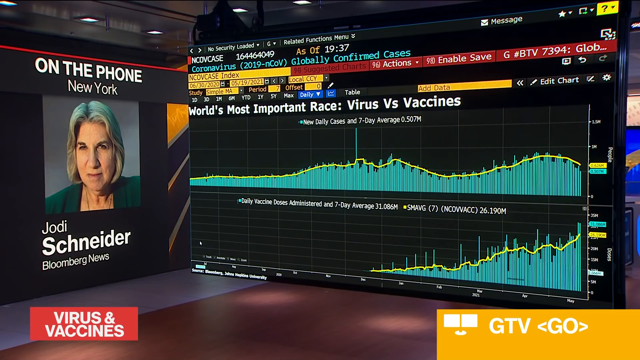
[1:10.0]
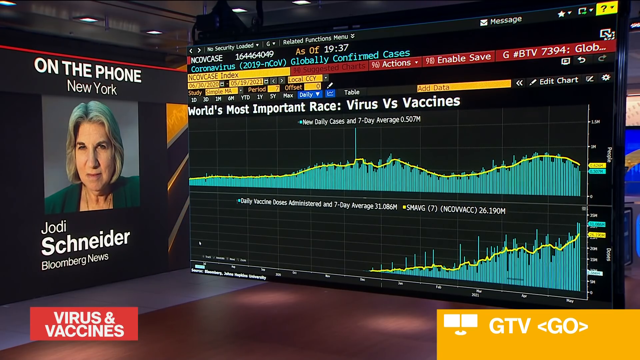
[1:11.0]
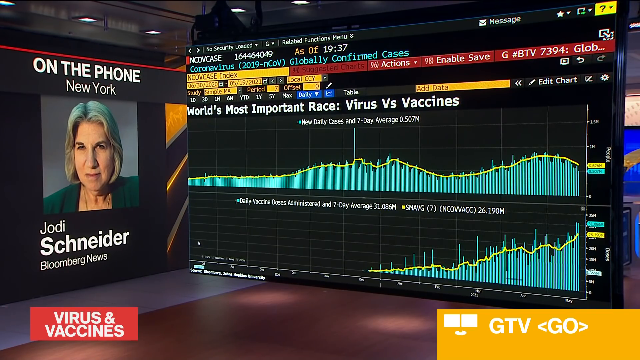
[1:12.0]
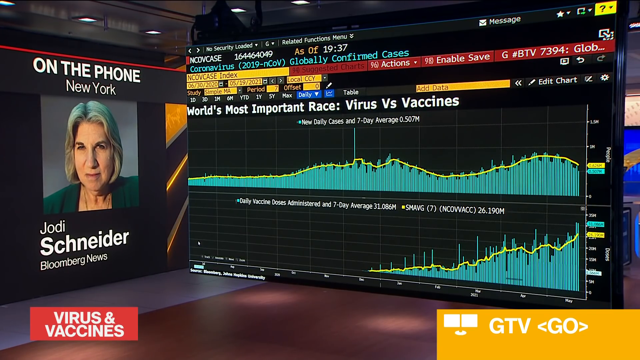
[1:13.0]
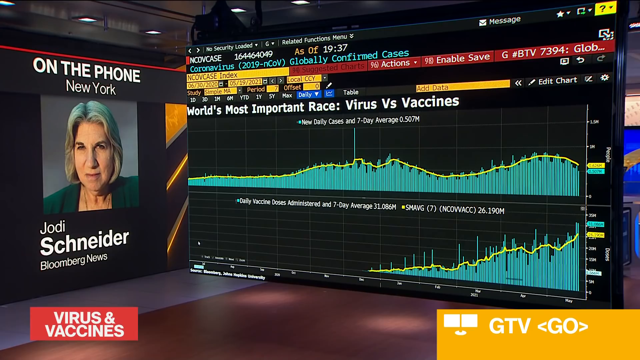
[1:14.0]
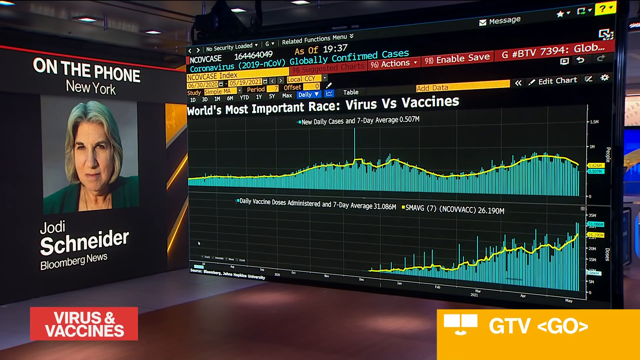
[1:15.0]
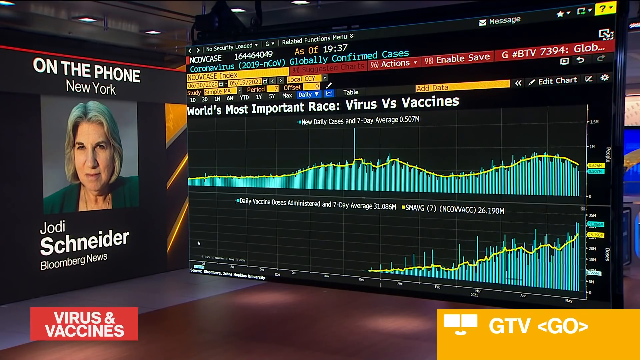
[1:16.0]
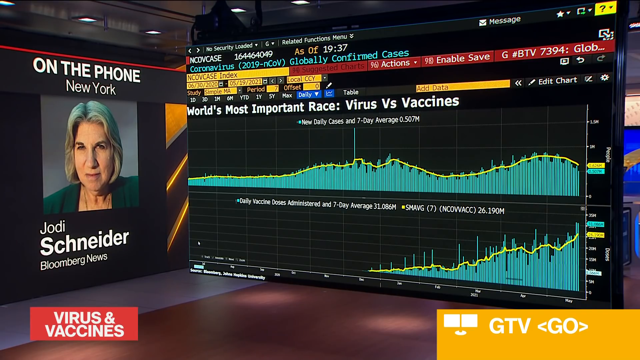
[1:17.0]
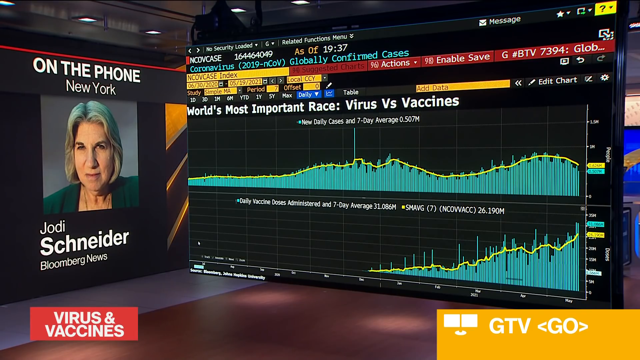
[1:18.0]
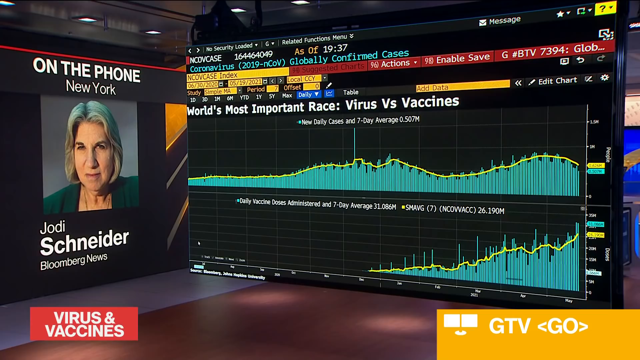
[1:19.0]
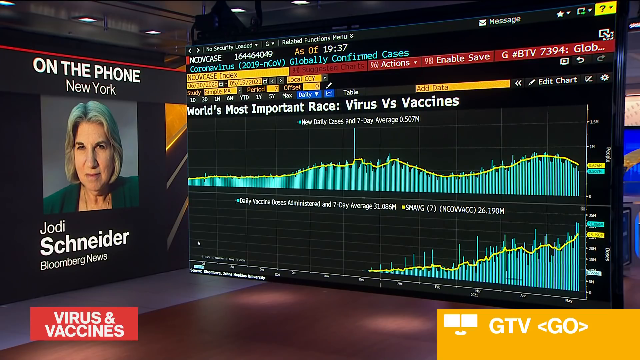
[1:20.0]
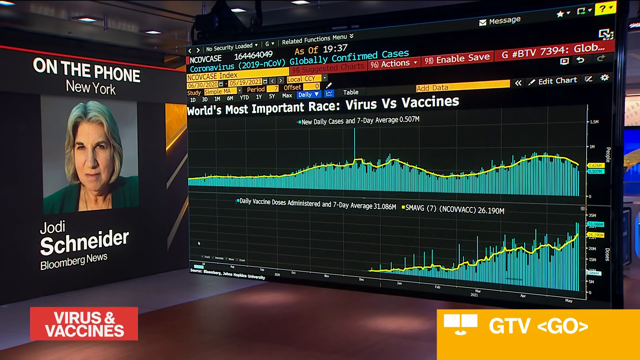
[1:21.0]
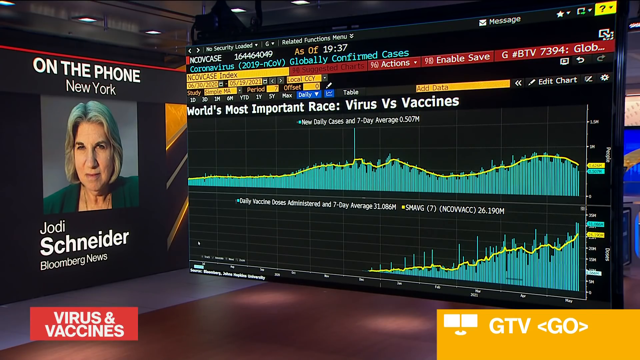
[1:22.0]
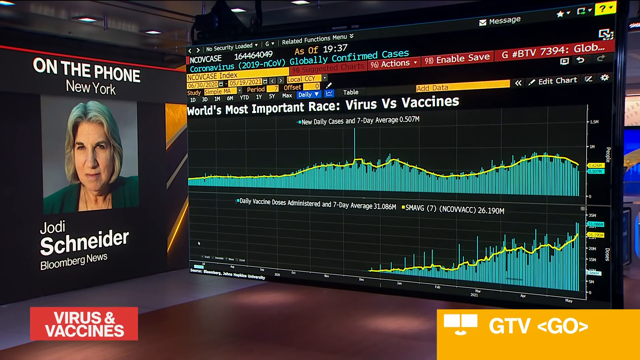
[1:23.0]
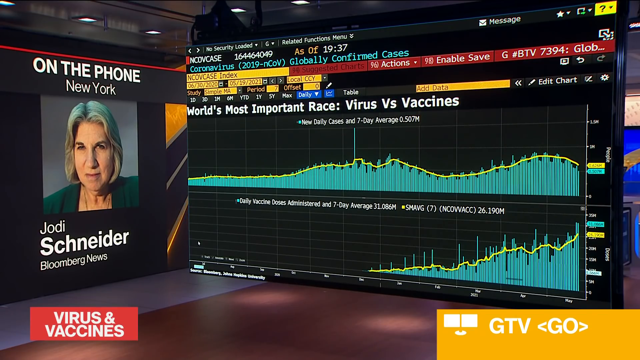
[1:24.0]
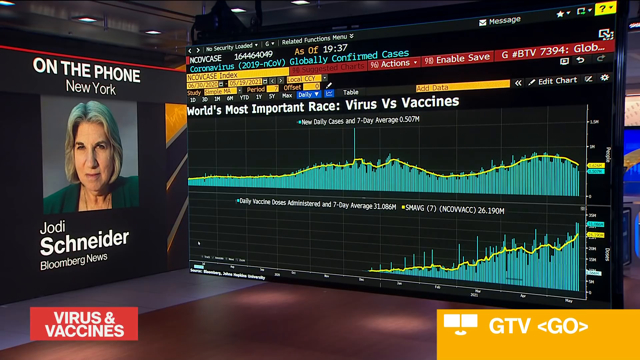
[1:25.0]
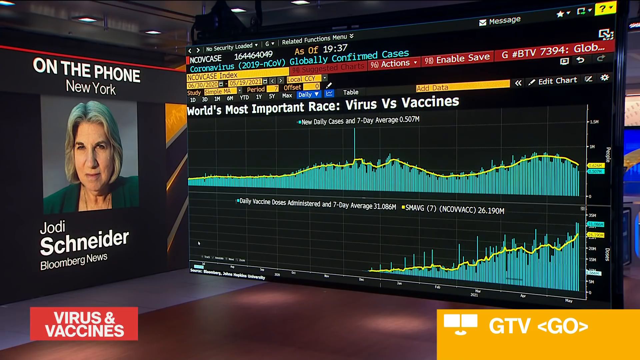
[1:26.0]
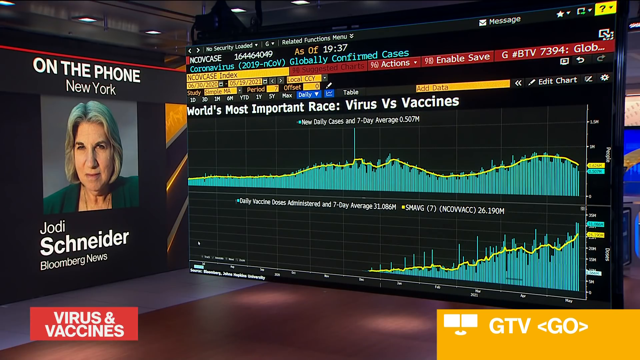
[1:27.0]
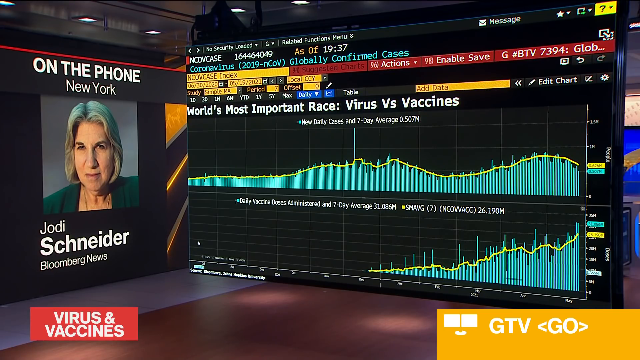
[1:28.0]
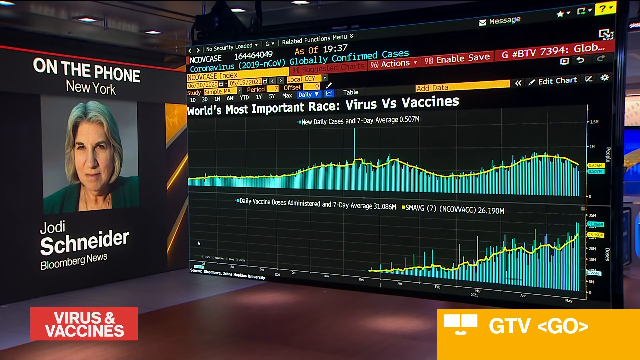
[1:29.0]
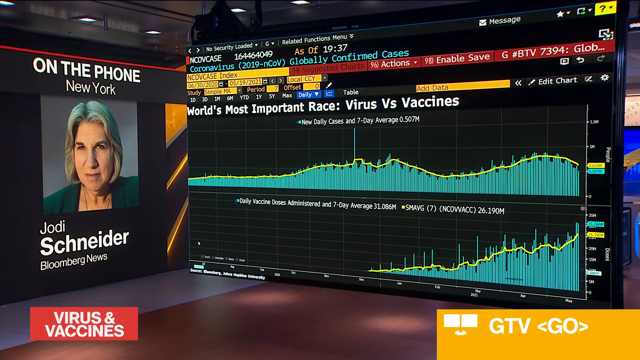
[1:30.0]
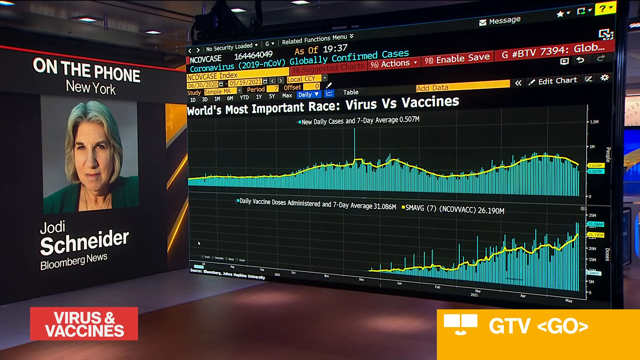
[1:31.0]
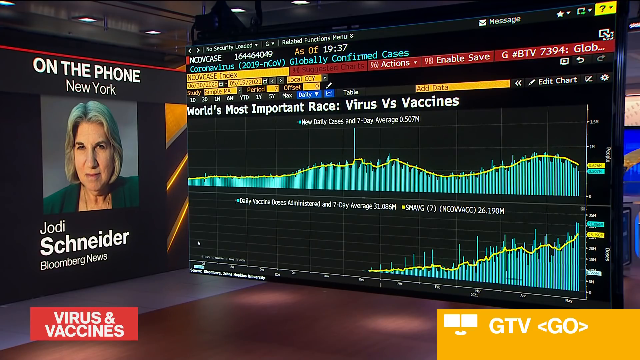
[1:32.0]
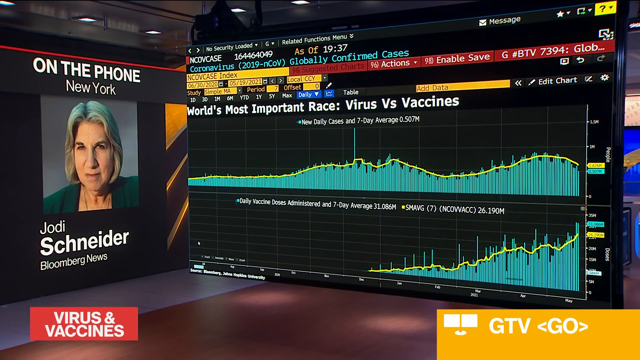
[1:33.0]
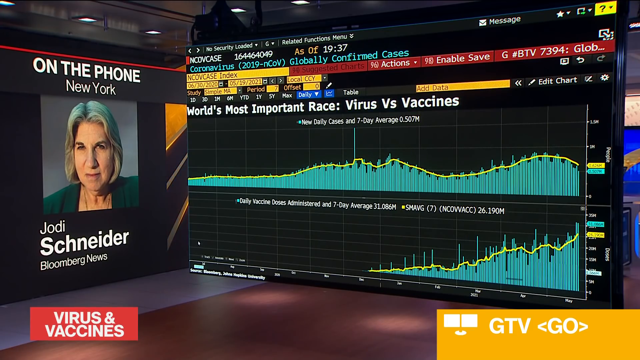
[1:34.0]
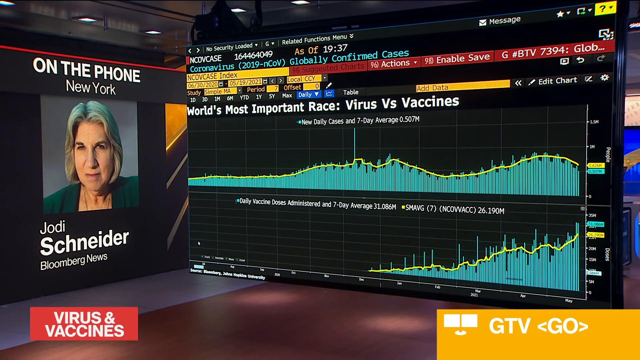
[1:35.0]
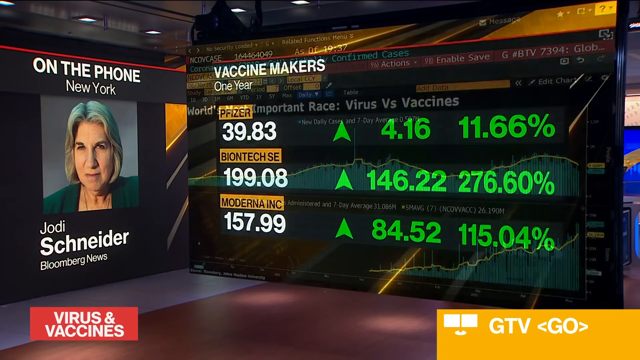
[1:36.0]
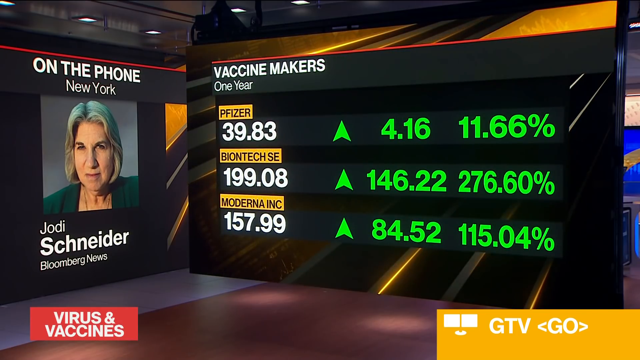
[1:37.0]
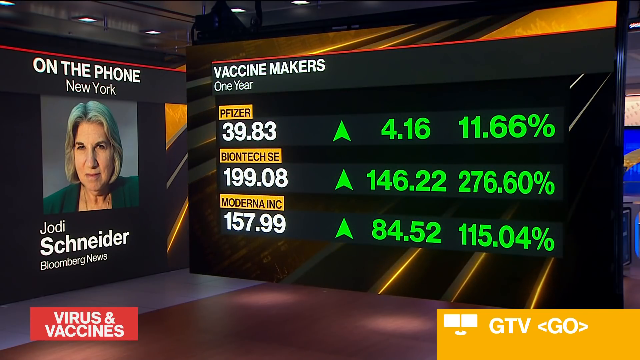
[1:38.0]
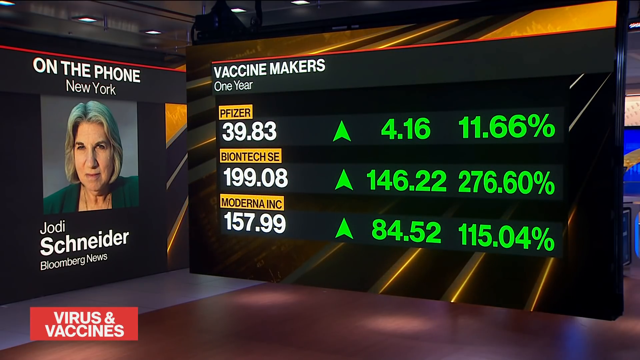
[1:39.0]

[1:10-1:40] Jodi is still on the phone while the graph titled "world's most important race virus versus vaccine" is shown, covering new daily cases as a seven-day average and vaccines administered as a seven-day average. Later, a screen of the best vaccine makers over one year appears: Pfizer up 11.66%, BioNTech SE up 276%, and Moderna up 115%, possibly stock gains. On-screen text reads "2020 to 2021."